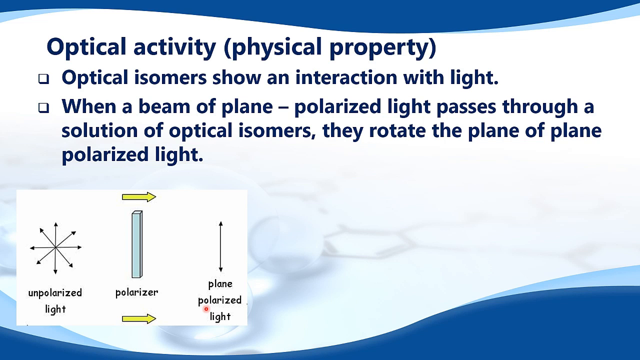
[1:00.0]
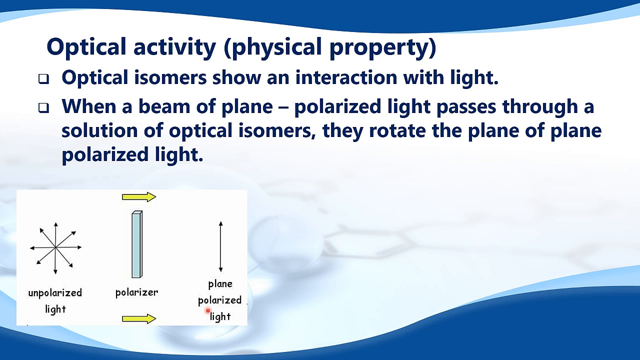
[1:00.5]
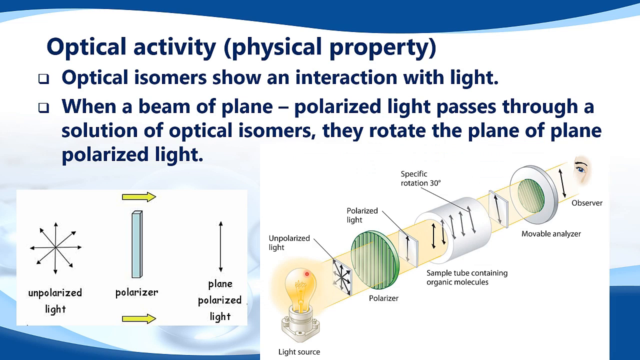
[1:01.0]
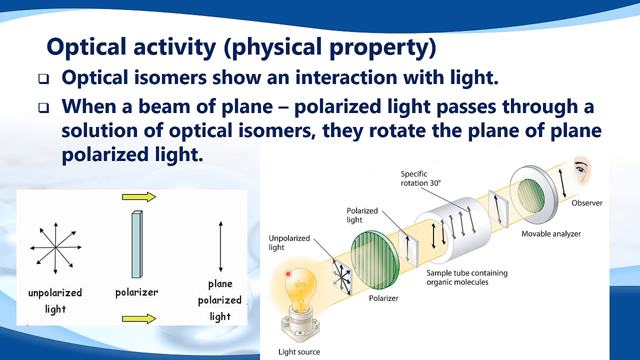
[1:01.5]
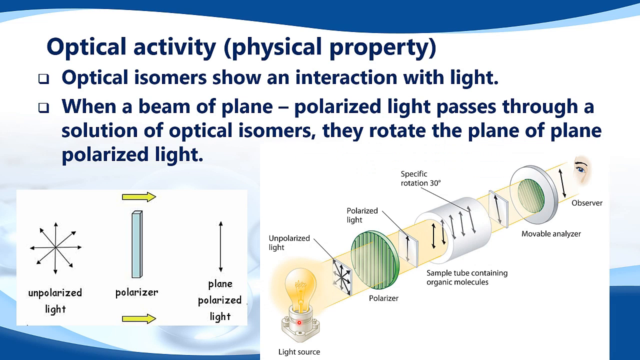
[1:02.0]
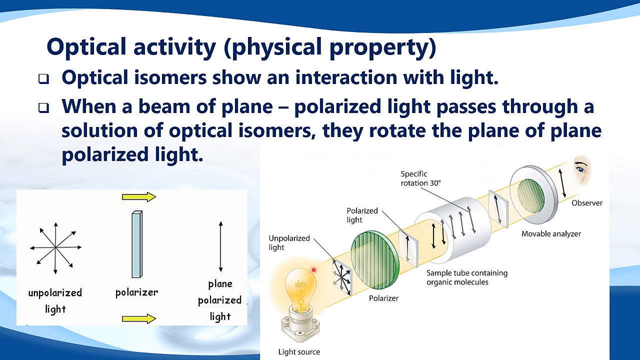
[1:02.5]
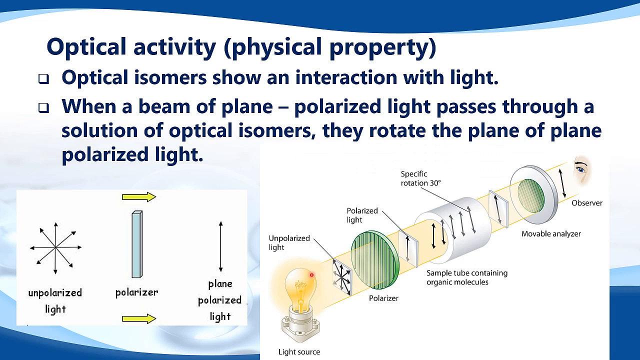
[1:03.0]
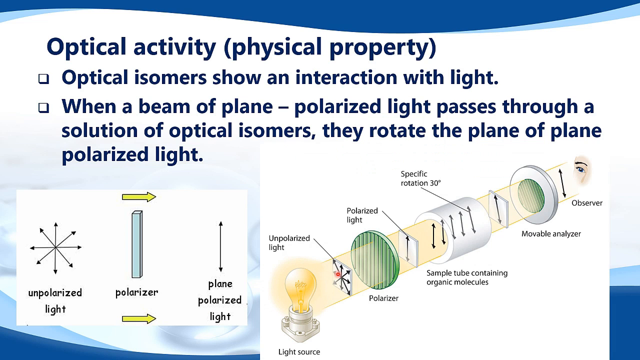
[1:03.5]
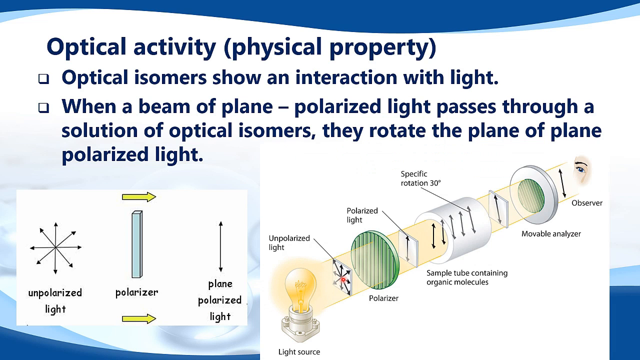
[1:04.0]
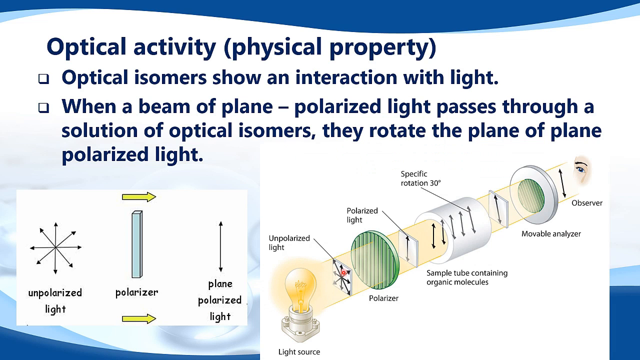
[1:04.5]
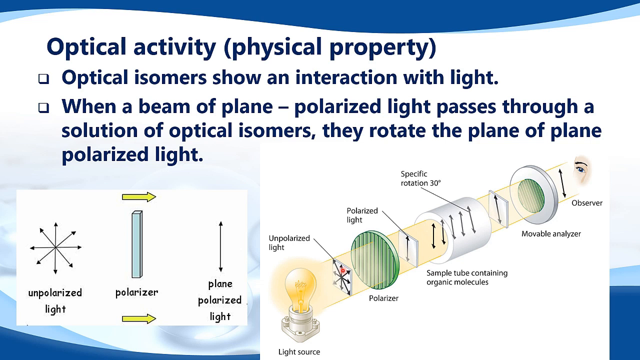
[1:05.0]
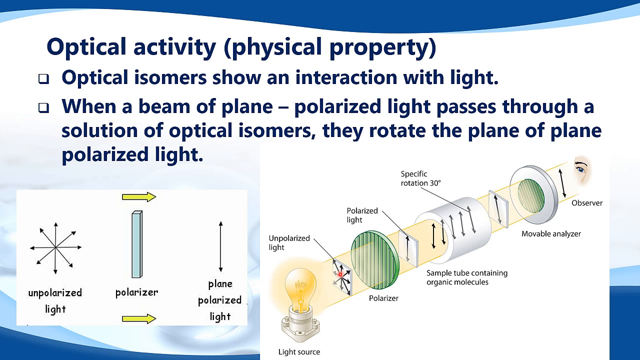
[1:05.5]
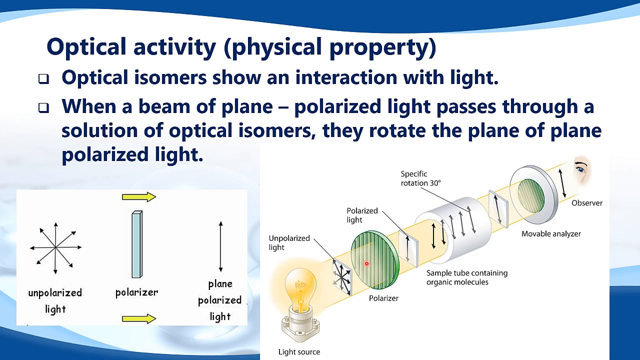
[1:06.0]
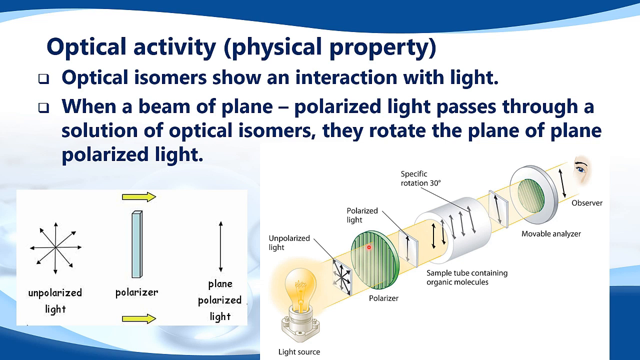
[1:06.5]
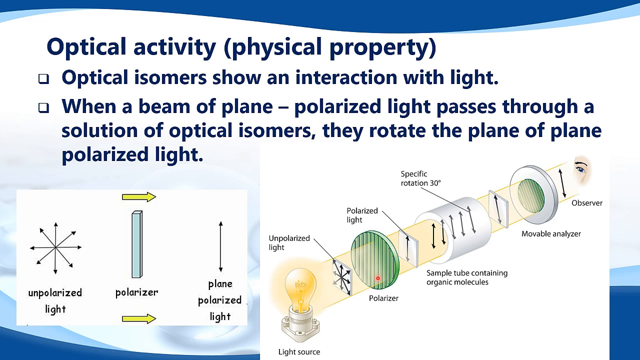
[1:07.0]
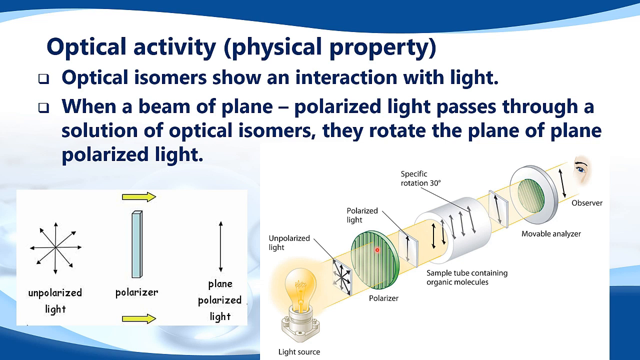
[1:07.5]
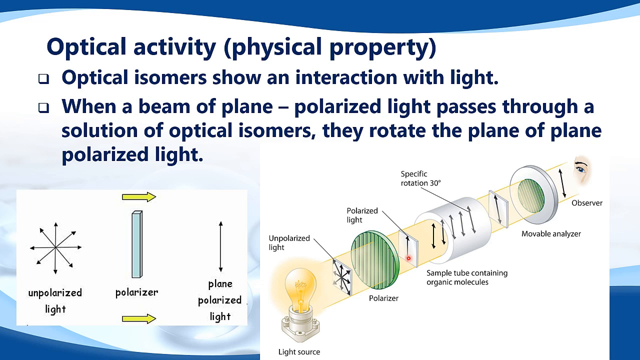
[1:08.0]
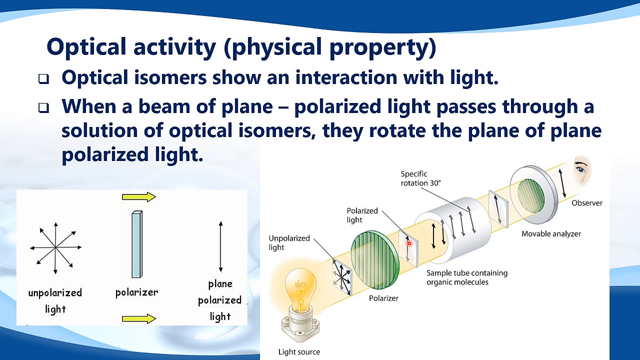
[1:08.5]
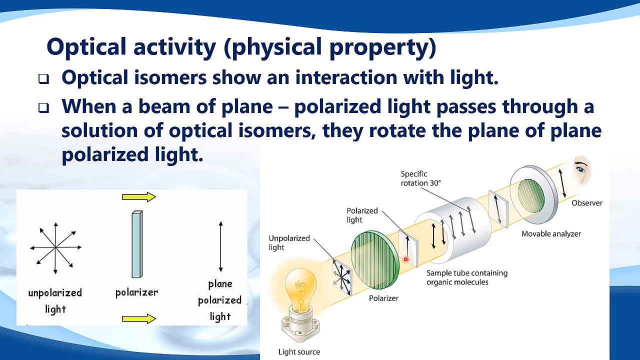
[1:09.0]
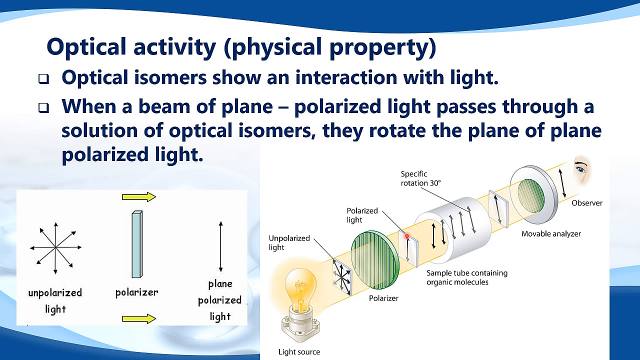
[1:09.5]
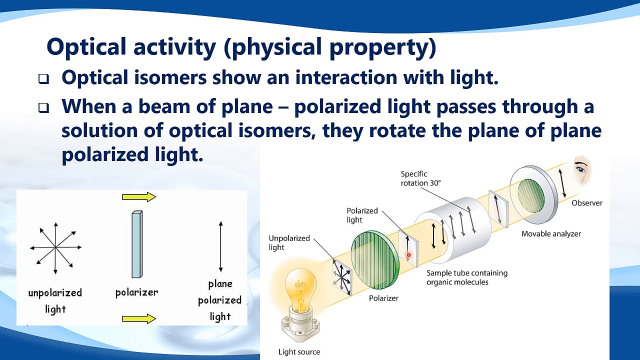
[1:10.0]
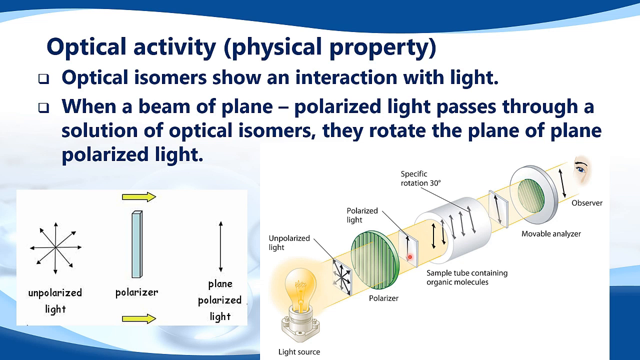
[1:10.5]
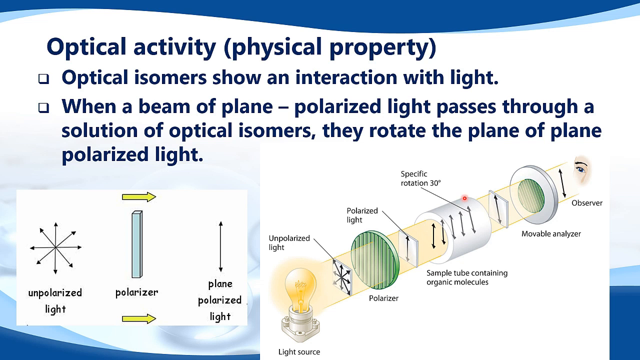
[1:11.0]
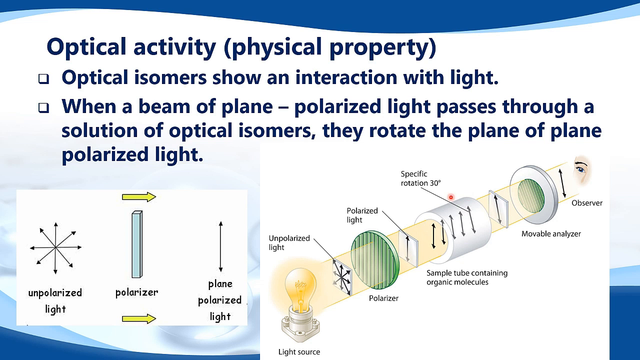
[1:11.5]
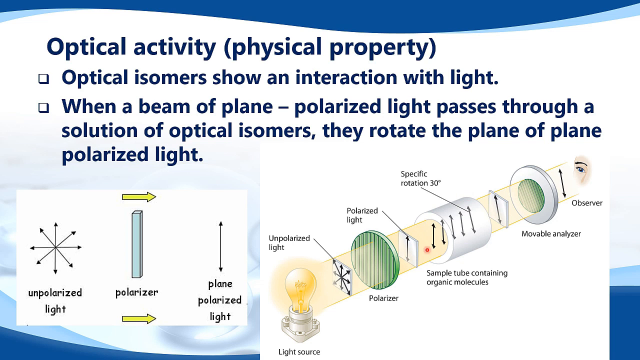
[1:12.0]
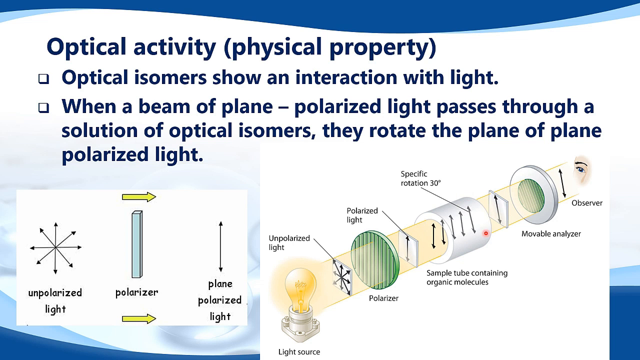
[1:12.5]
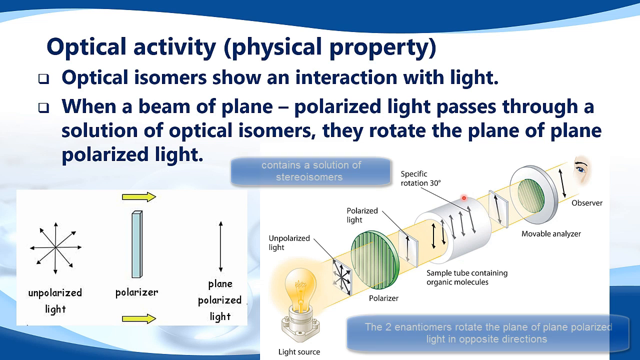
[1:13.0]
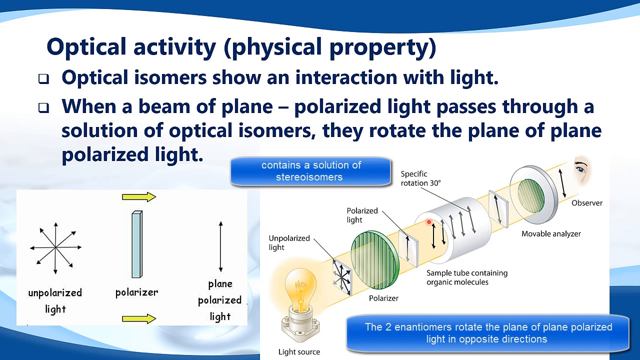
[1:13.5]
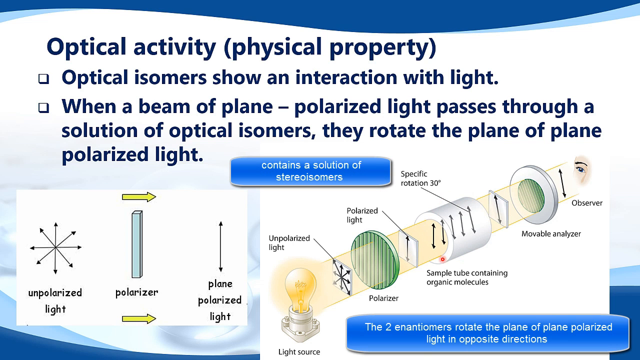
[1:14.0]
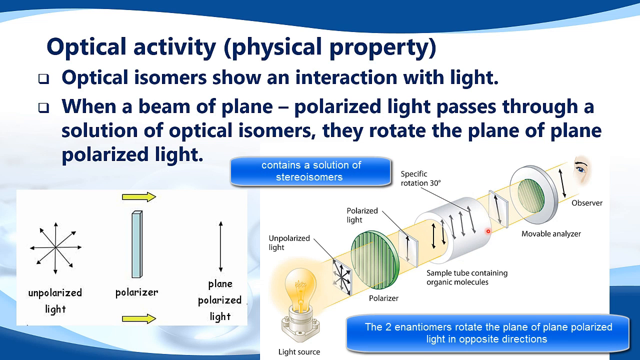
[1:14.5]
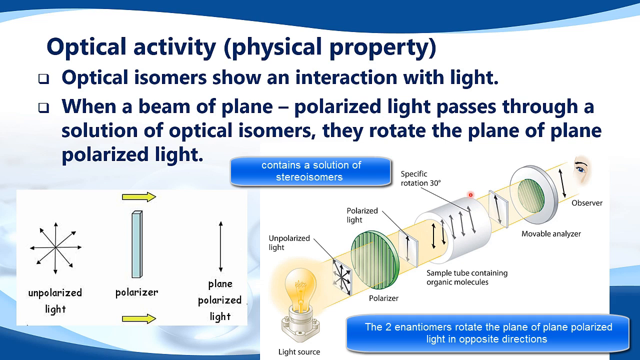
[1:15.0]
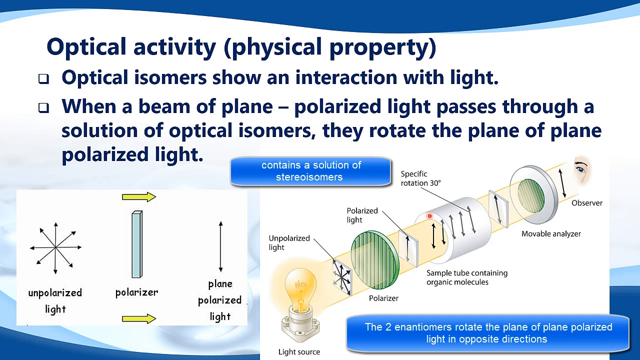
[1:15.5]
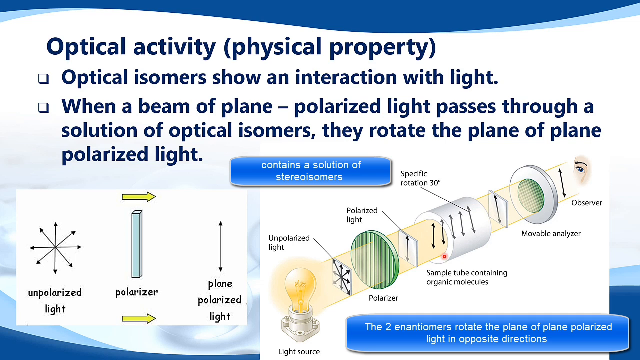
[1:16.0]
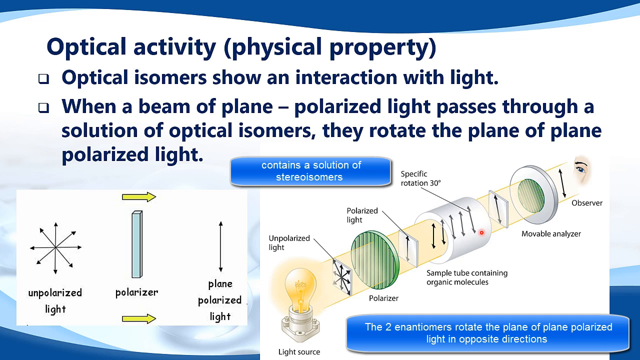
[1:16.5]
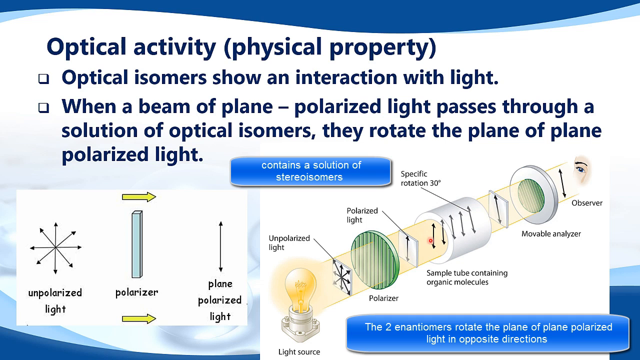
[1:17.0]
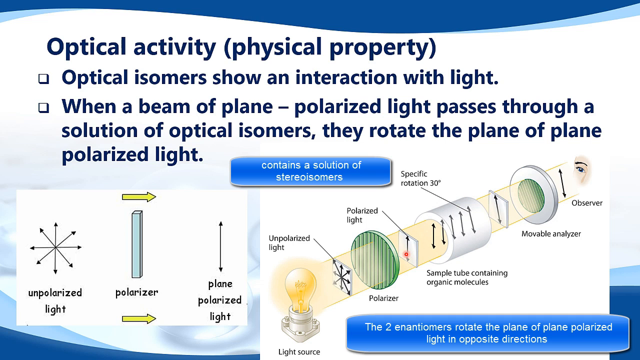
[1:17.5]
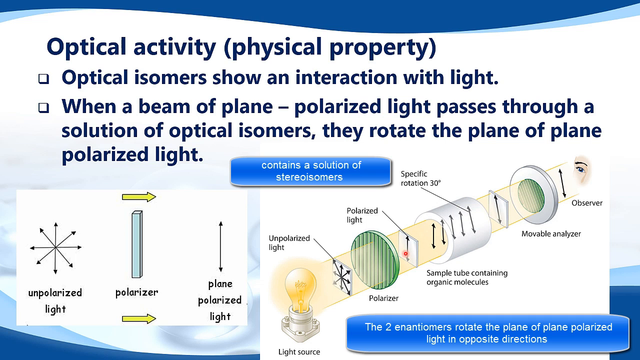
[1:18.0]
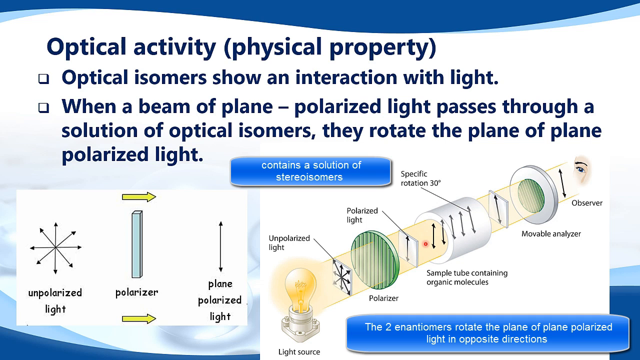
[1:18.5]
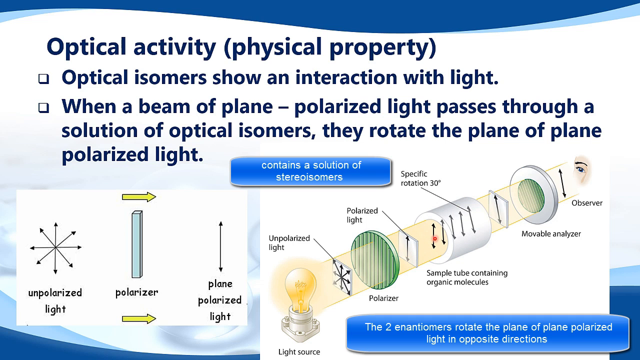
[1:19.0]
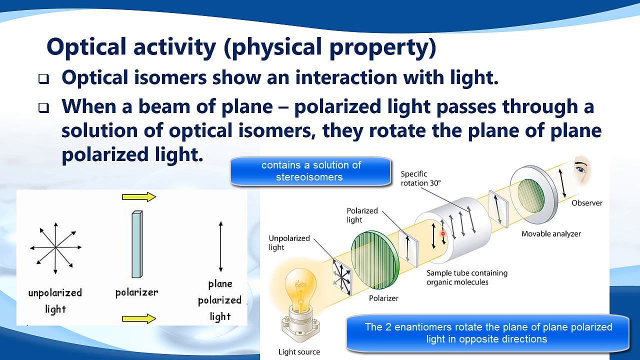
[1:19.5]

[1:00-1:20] A second illustration comes up on the right side in a larger white rectangle, so two white rectangles are side by side. This diagram is complex. In the middle is what almost looks like a cylinder, resembling a little white PVC pipe, and it is almost as if it has been pulled apart, with a cap to the right and a cap to the left of it. The arrangement is diagonal, from the lower left to the upper right. Little squares are between the white cylinder and the caps on either end. What almost looks like a beam of light, like a bar, runs the diagonal length of the white rectangle. At the lower end of the beam is a light bulb, glowing orange, on what seems to be a silver base. Tiny black text below it reads "light source". Above the bulb is the label "unpolarized light", with a black line pointing to a square between the cap and the light bulb; that square contains the same black lines with arrows as the earlier unpolarized light graphic. The squares, caps and other parts all face at an angle because of the diagonal. Next is a green cap with vertical lines, labeled "polarizer" underneath.